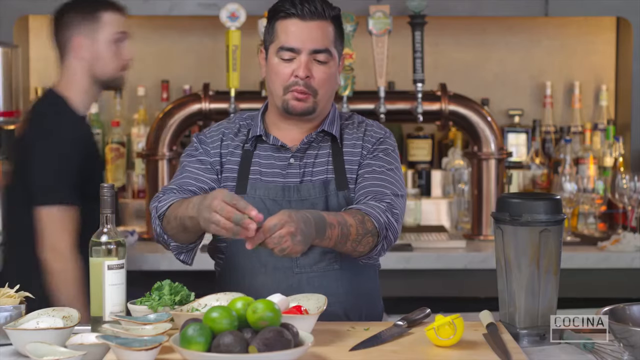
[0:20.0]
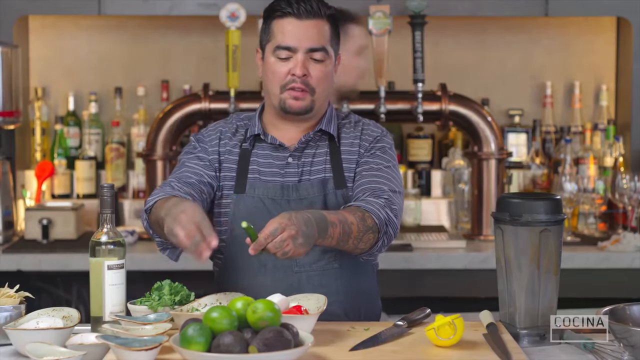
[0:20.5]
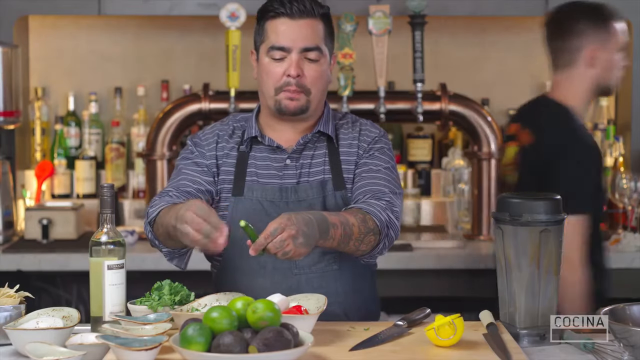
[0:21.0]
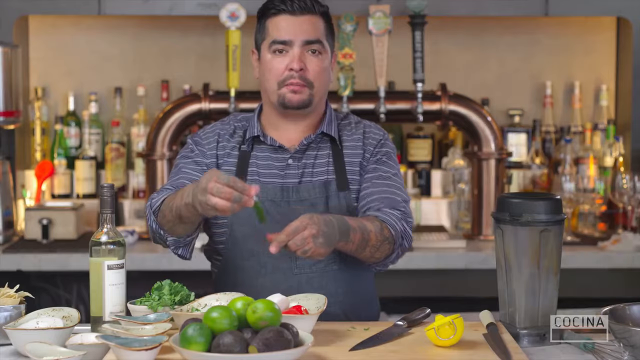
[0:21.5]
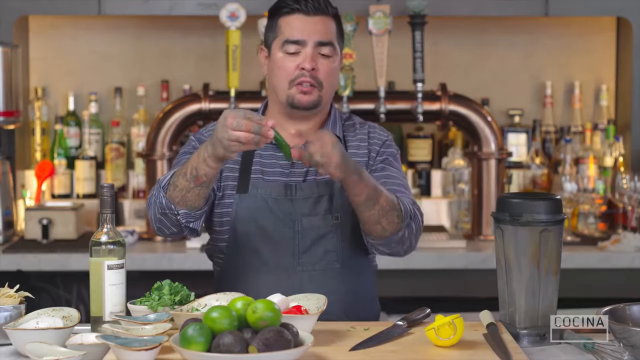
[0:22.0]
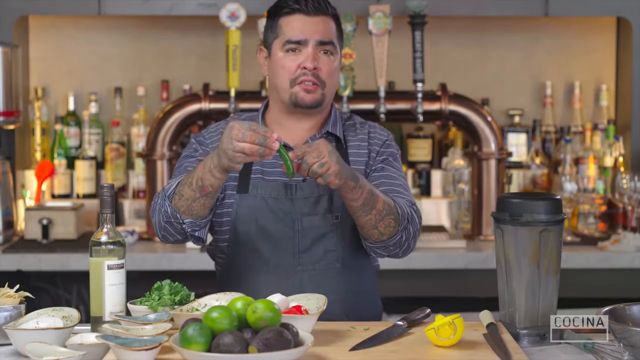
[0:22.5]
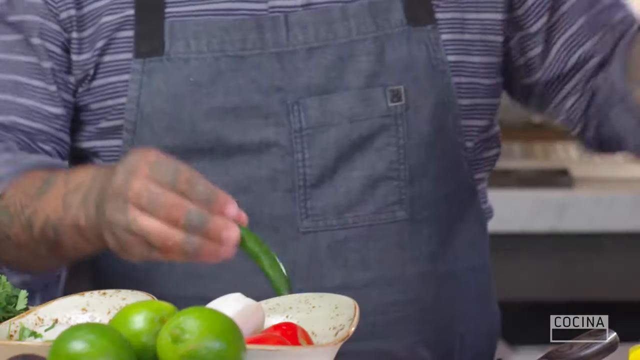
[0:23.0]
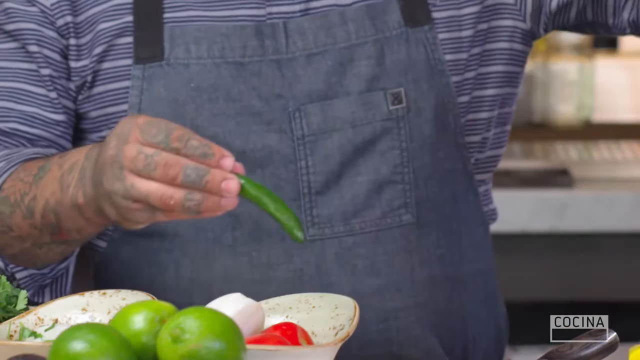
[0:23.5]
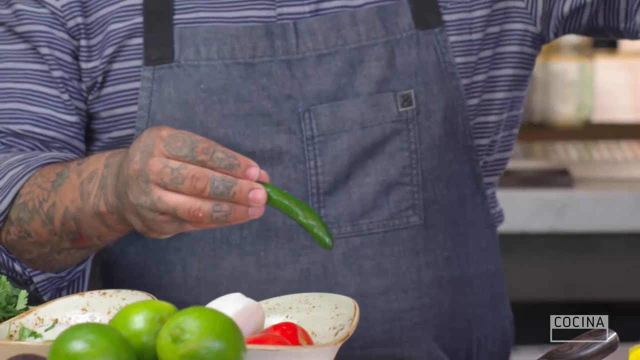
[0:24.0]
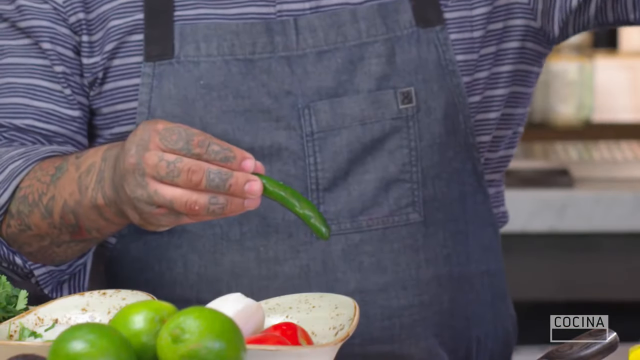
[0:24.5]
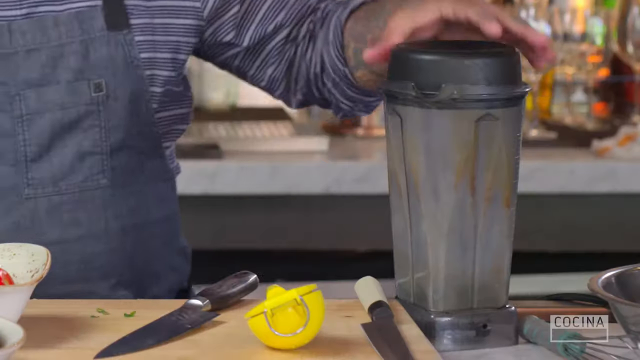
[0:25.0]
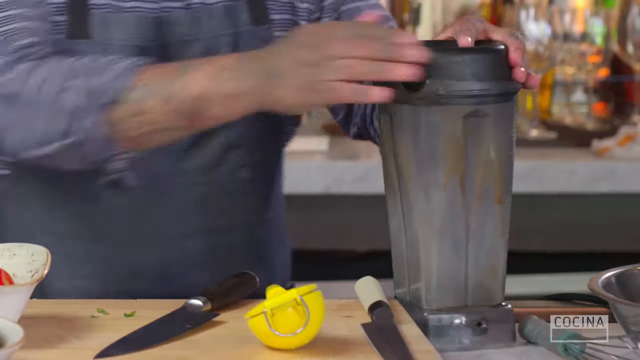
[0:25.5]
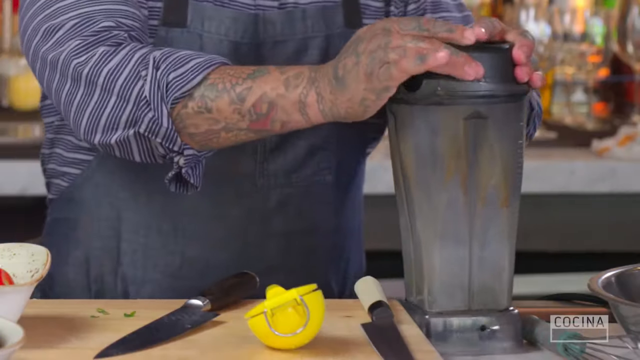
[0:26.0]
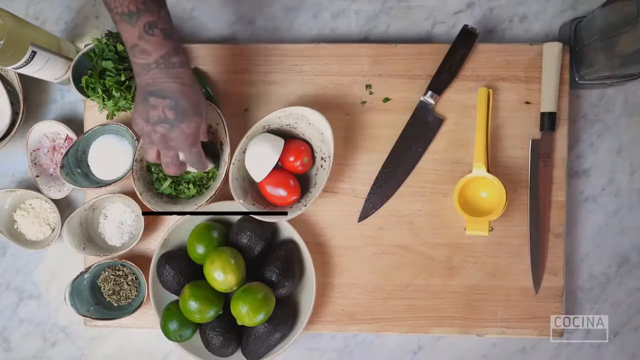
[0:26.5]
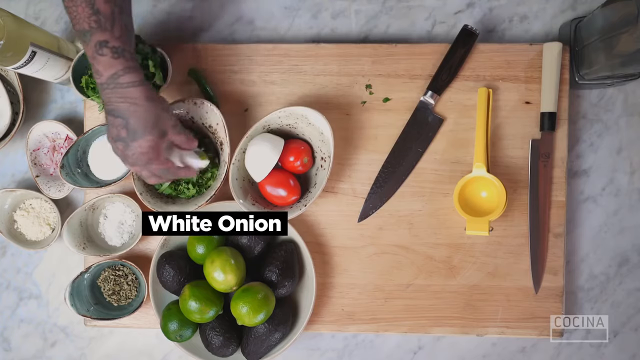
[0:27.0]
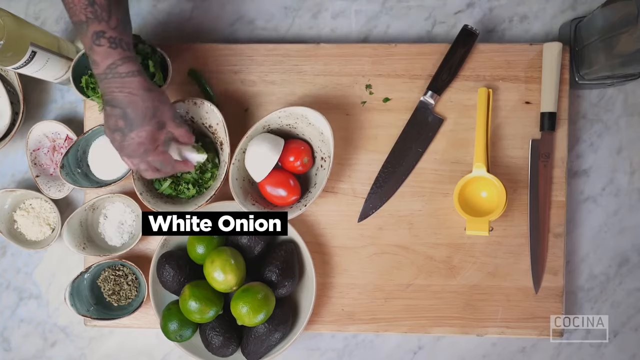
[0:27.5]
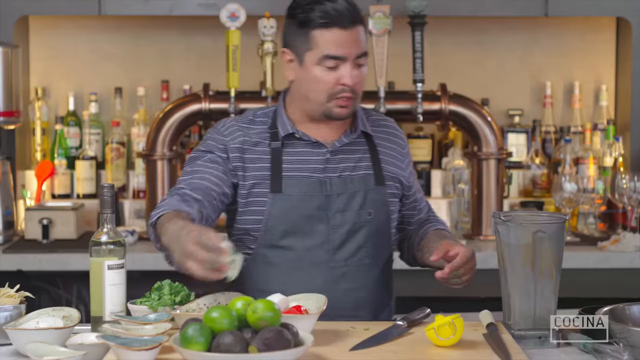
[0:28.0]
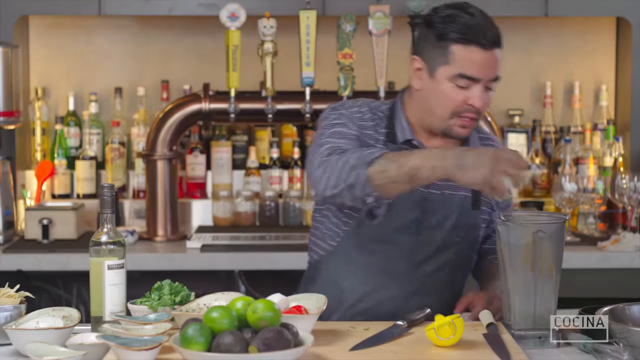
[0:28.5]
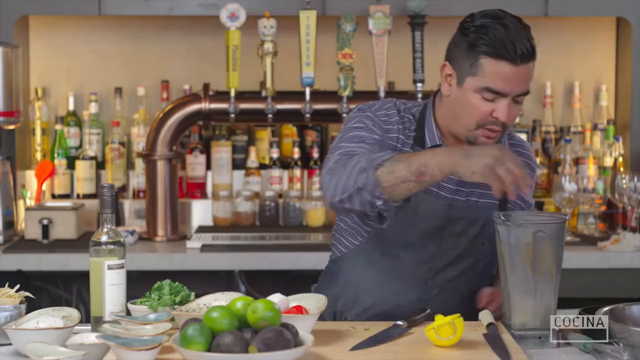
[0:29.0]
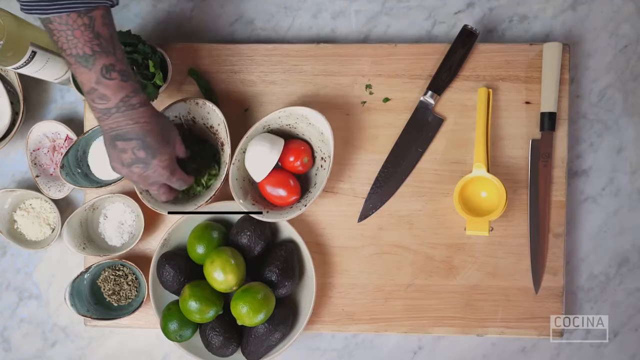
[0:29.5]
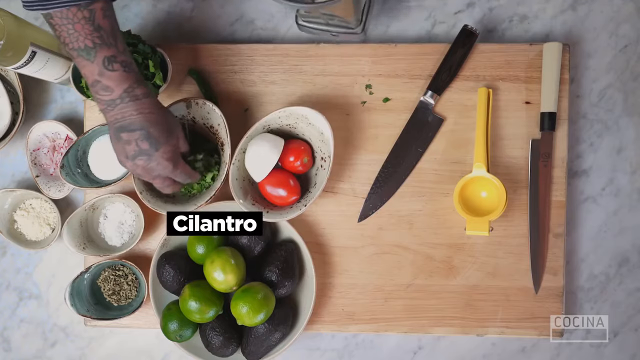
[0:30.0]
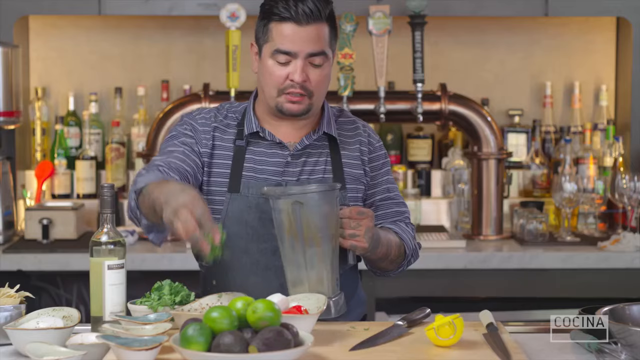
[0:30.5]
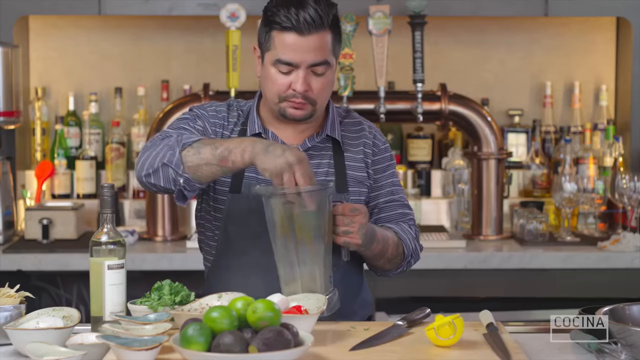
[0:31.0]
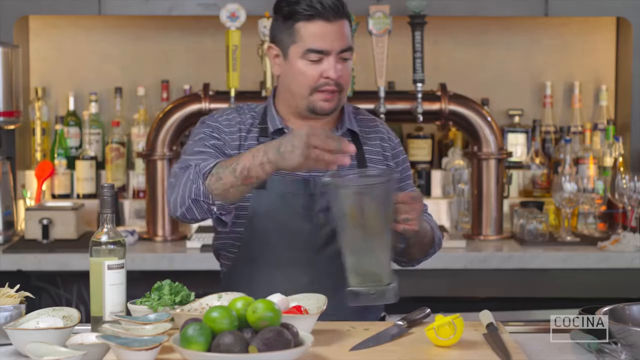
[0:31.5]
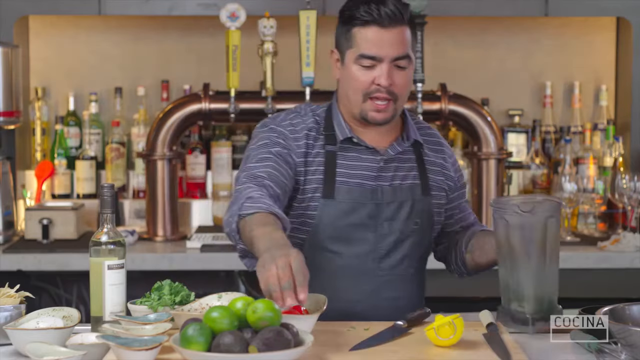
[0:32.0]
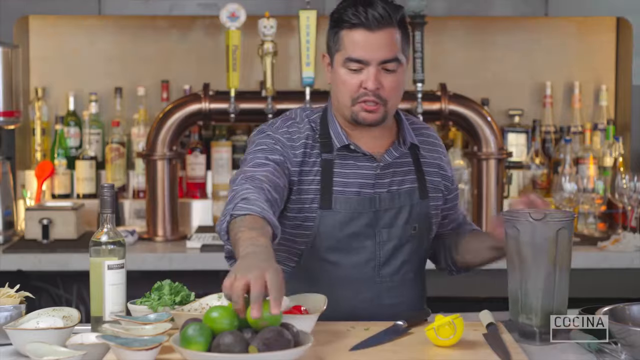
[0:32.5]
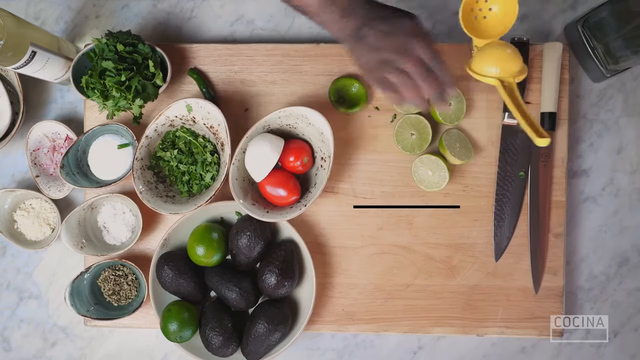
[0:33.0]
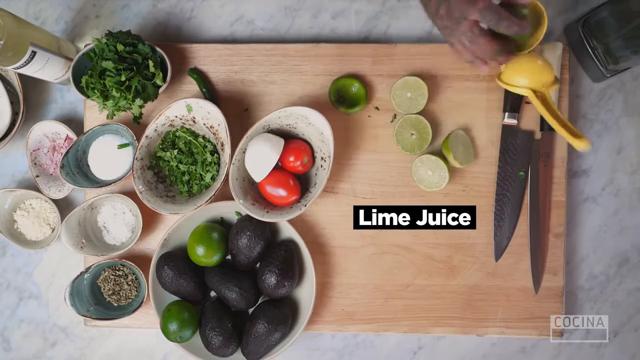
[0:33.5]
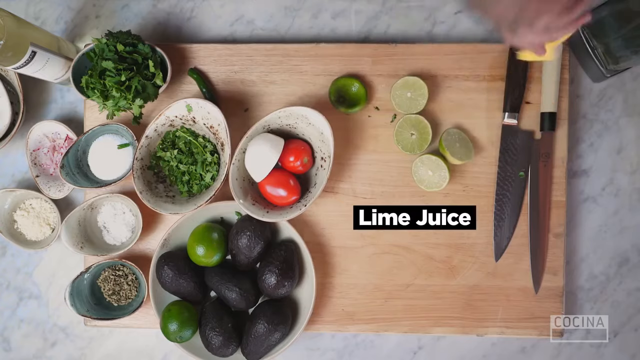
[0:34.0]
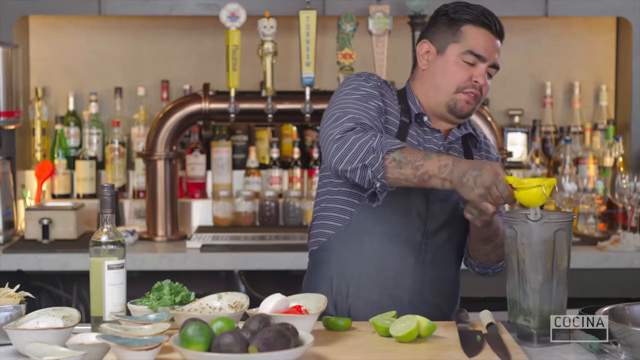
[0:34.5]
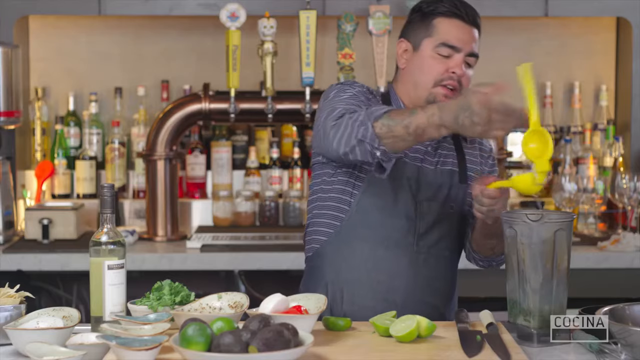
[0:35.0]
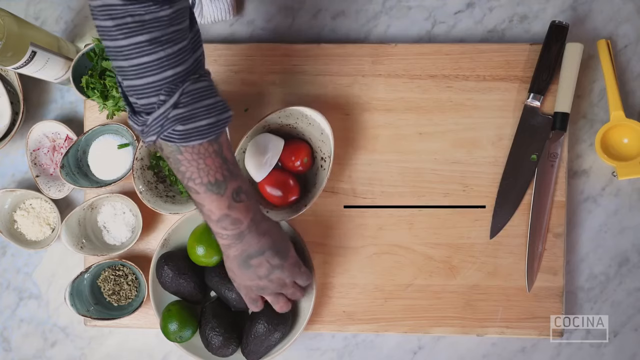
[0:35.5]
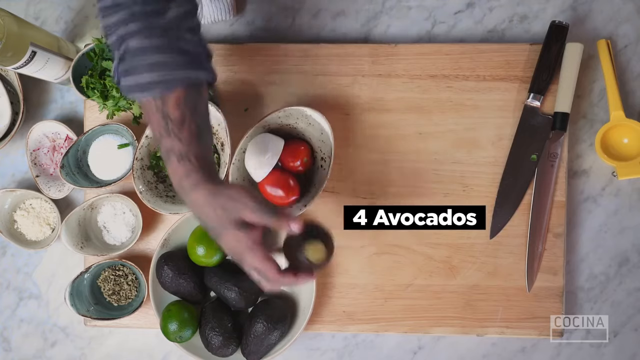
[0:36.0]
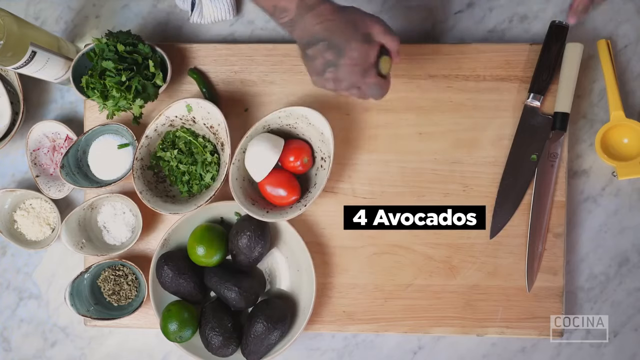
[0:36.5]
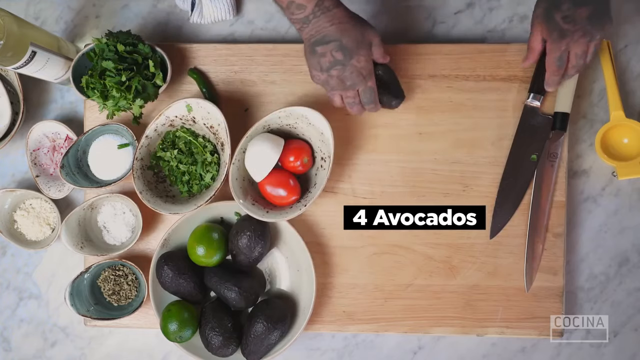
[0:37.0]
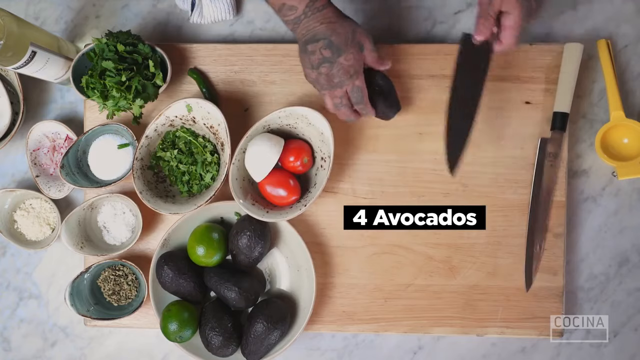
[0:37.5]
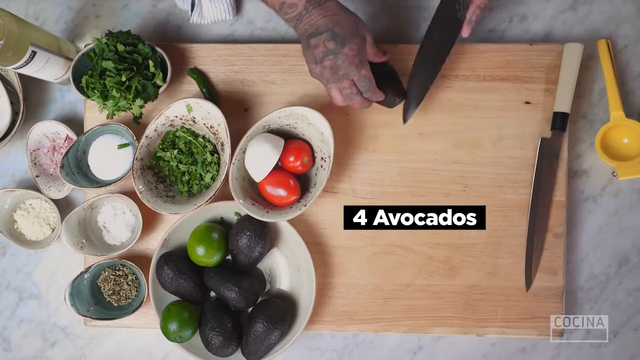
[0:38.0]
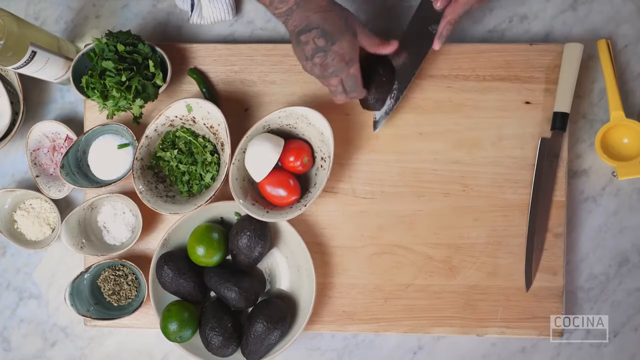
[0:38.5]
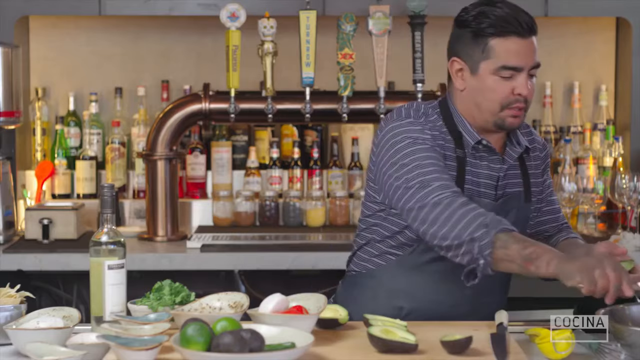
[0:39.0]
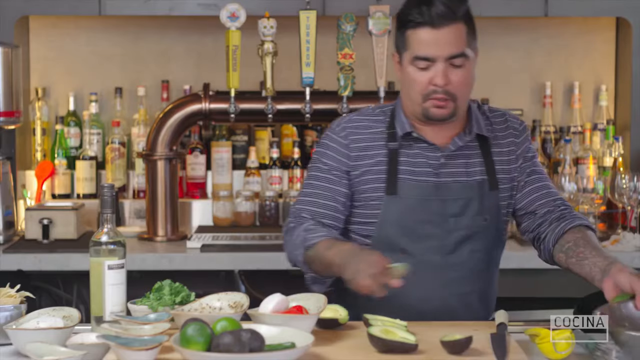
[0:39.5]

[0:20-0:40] A cook or chef who looks Mexican and appears to be around his 30s has a black beard and mustache, tattooed arms and rolled-up sleeves. He wears a blue shirt with white stripes and a blue apron. He holds a green chili in his left hand. In the background are what look like many bottles of liquor, and in the foreground he stands behind a table with a cutting board, limes, avocado, coriander and many ingredients and bowls. On the right side is a mixing container or blender. Talking, he holds up the green chili in his right hand, and the camera zooms in on it. He opens the blender and puts a white onion inside, with white text reading "white onion". He puts cilantro into the blender, with white text reading "cilantro". He takes a lime and a white juicer and squeezes juice into it, with white text reading "lime juice". He takes an avocado and starts cutting it, with white text reading "four avocados"; he cuts across the center of it and pours in the avocado. He puts all these ingredients into the blender, a blender container with a black lid.